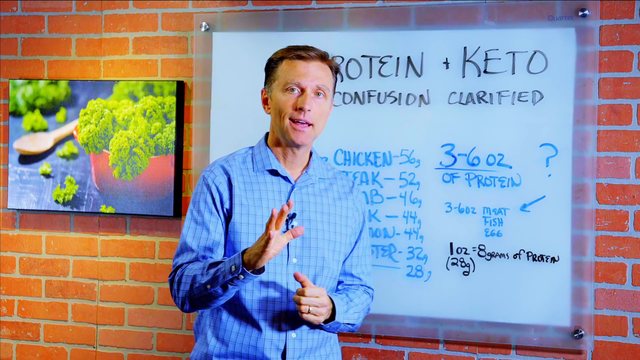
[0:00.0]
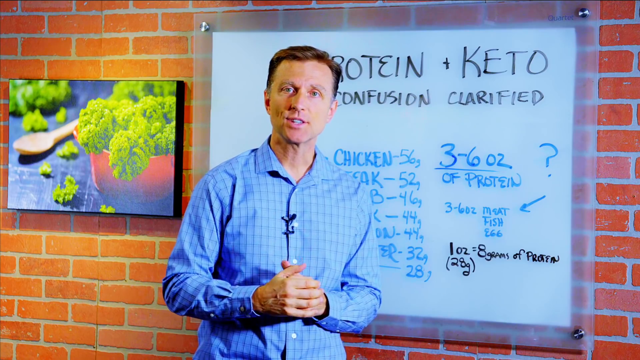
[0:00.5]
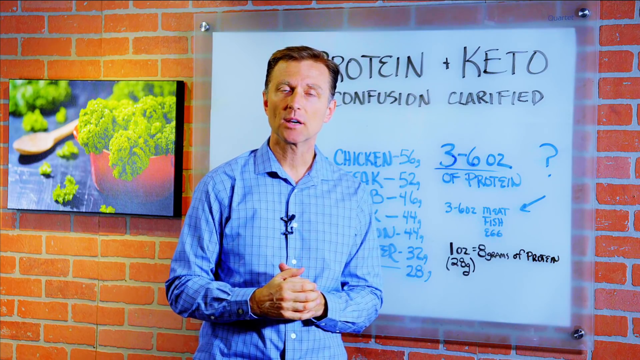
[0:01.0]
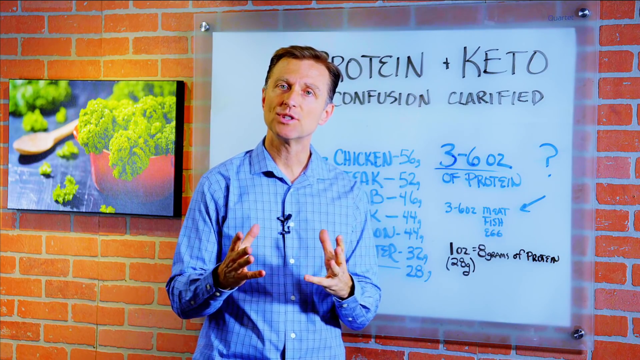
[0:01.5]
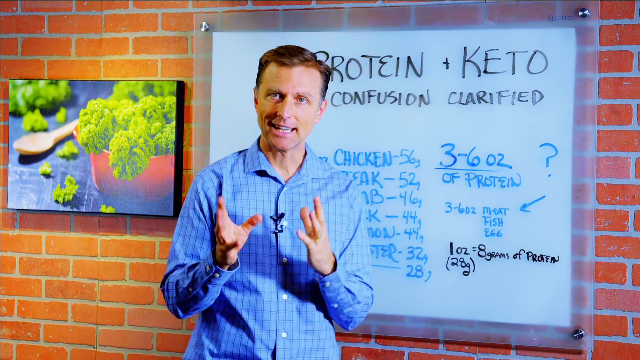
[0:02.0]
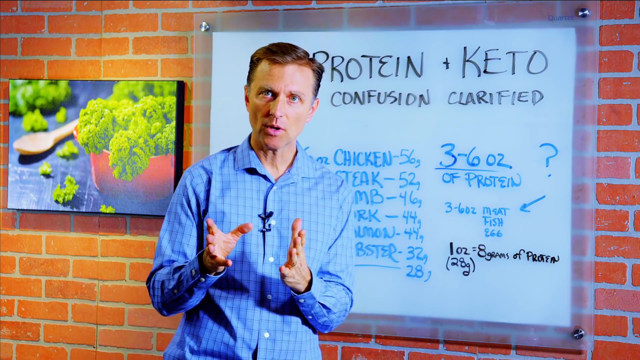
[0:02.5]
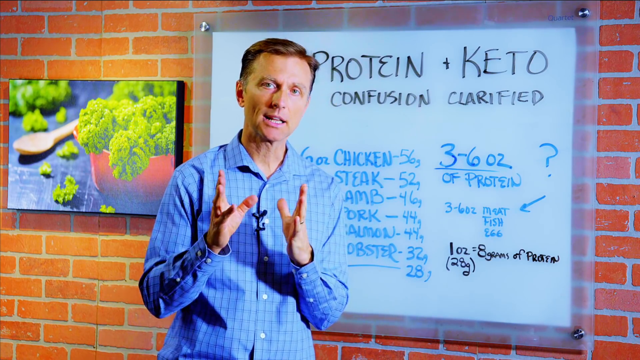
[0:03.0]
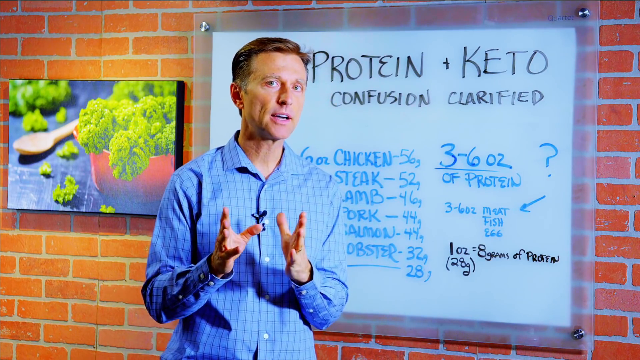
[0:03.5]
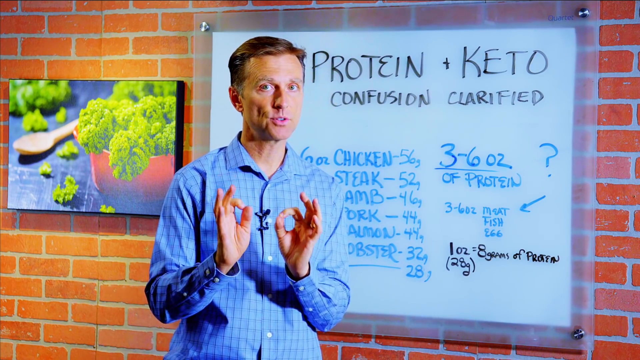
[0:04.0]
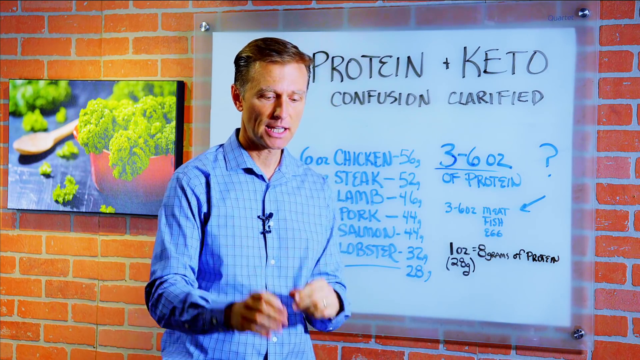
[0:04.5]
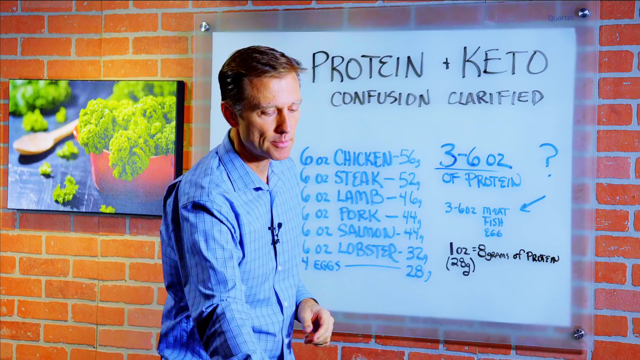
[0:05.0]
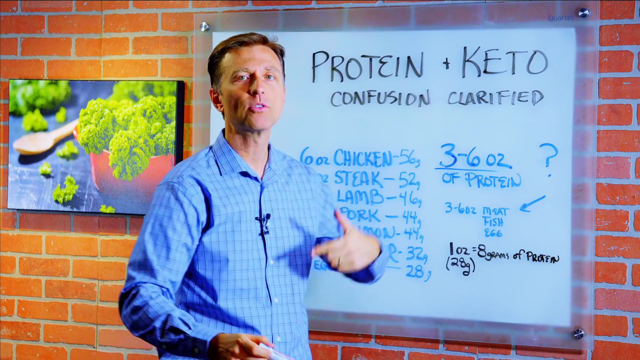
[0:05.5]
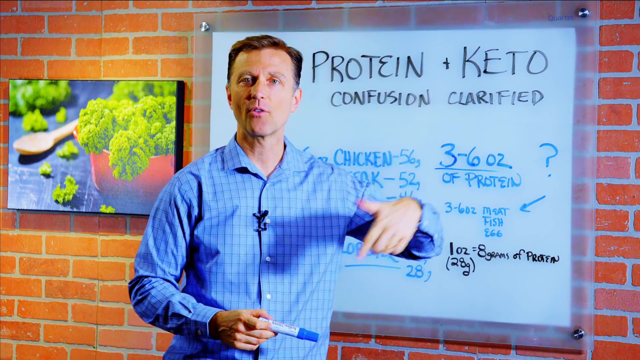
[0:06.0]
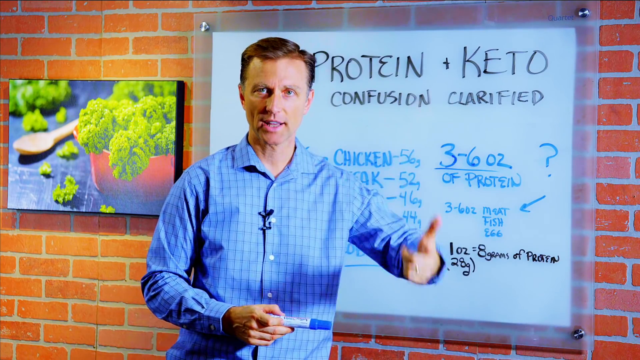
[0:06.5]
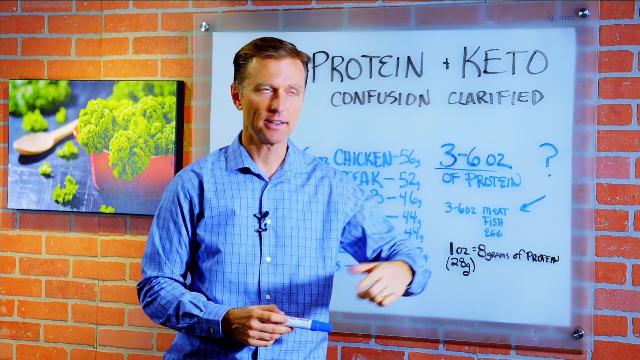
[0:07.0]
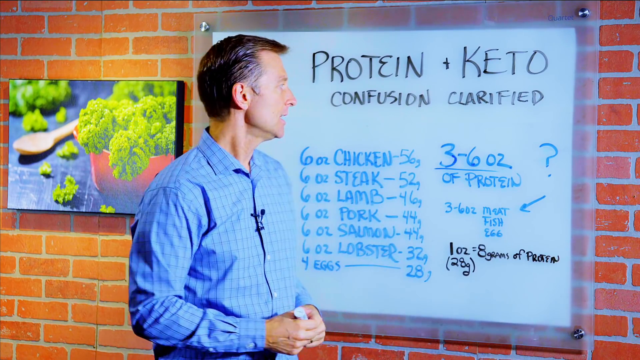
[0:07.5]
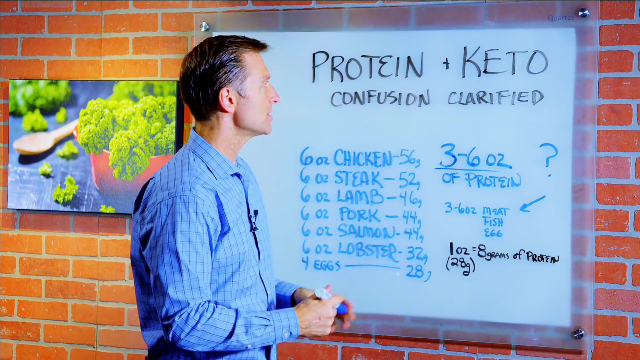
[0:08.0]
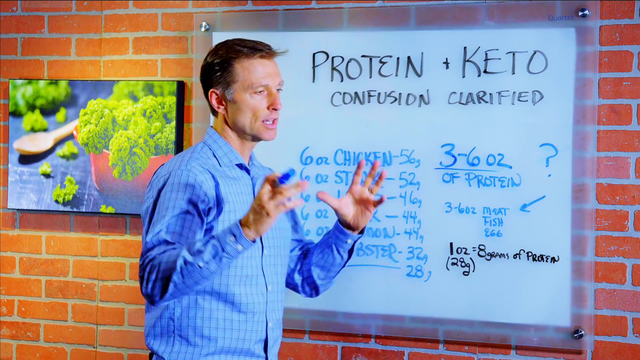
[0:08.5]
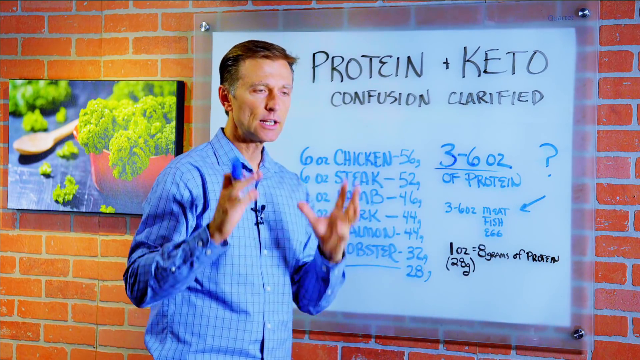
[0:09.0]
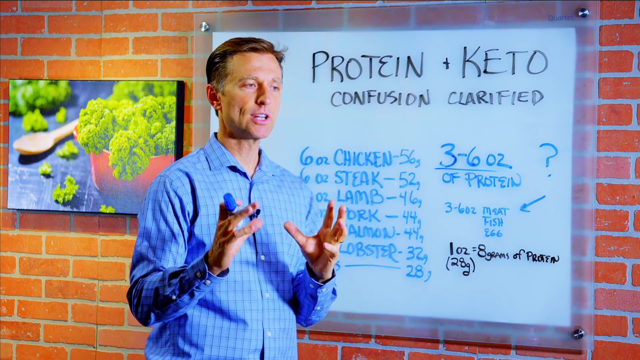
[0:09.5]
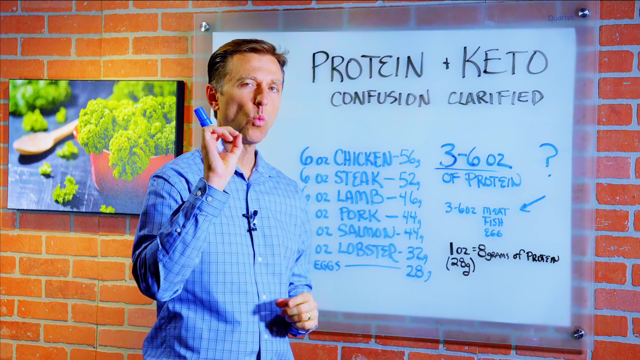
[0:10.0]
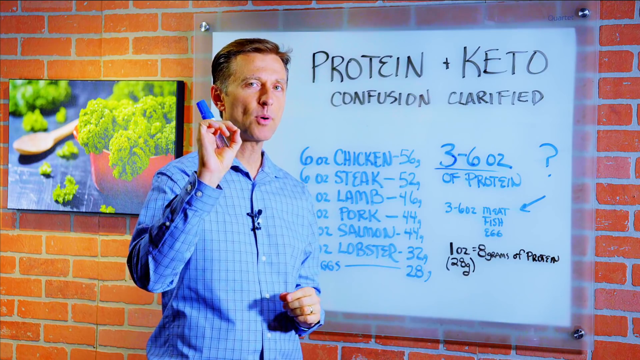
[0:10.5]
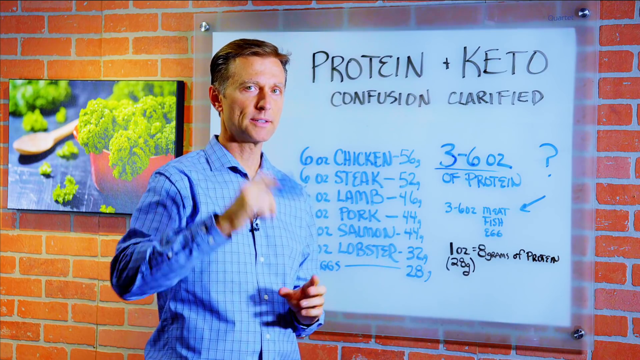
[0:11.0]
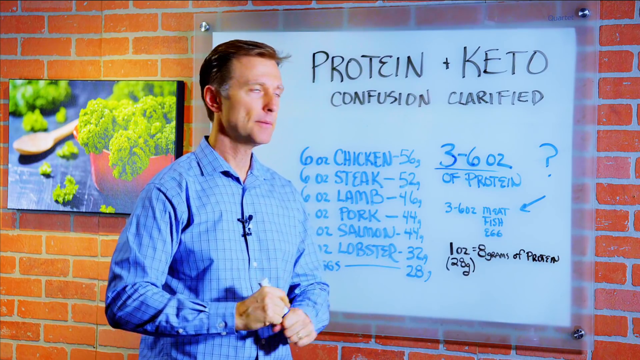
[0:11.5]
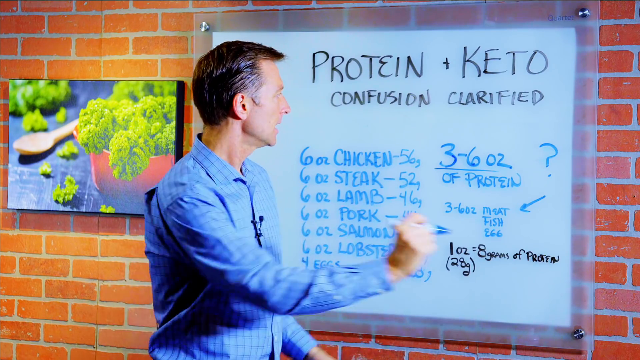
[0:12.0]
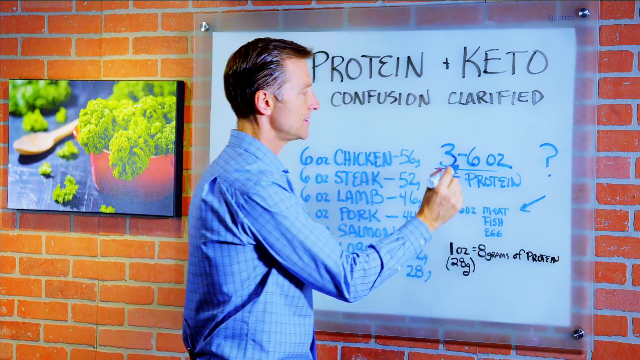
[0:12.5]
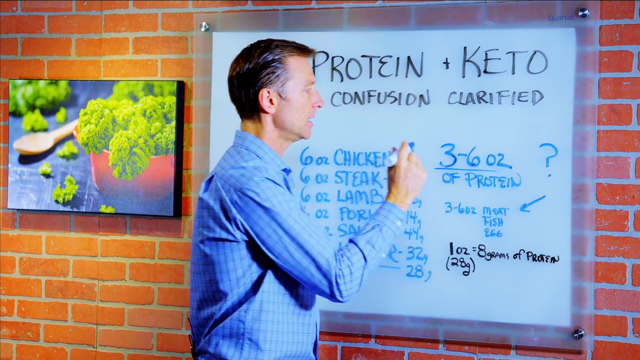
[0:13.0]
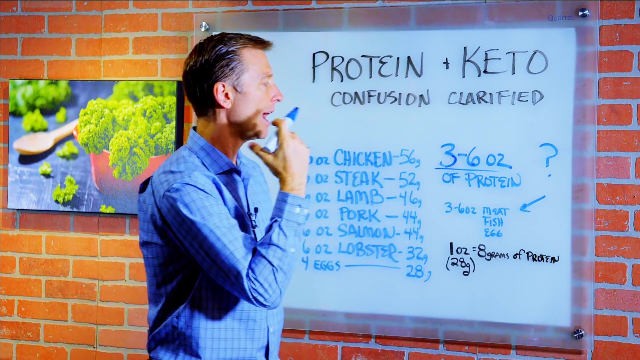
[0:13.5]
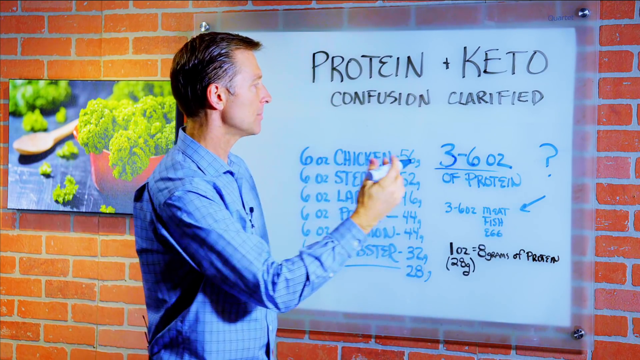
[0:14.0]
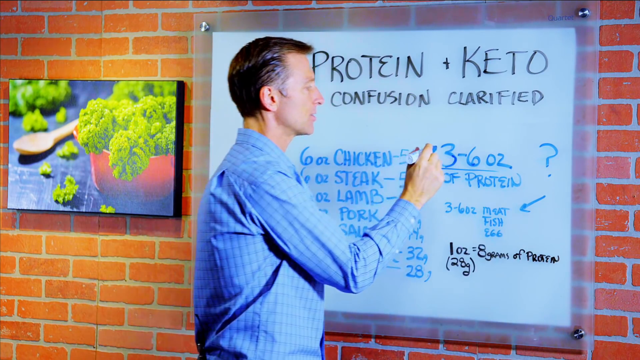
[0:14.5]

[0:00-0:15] A man stands in front of a brick wall, which appears to be a green screen; behind him is a photo of a salad bowl with leafy greens coming out of it and a wooden spoon. It is an instructional video, and behind the man is a whiteboard with text written on it, whose top two headers read "protein" and "keto". The man wears a blue dress shirt and has a microphone clipped to his front. He appears to be explaining the things on the board behind him, using his hands. He turns, picks up a blue marker and points to the text on the whiteboard, which is in blue and black. He points at a particular section, then turns back to the camera to explain, using his hands as he speaks and repeatedly pointing to different portions of the board. He opens the marker and readies his hand to write on the board, continues to explain, then puts the marker back down and explains some more with his hands. He picks the marker up again, pulls his hand back as though pulling his sleeve up, and turns to face the whiteboard.